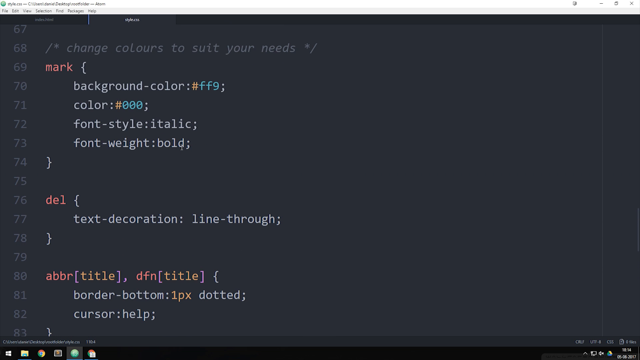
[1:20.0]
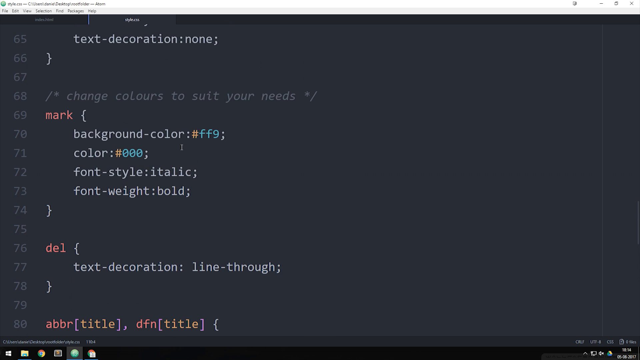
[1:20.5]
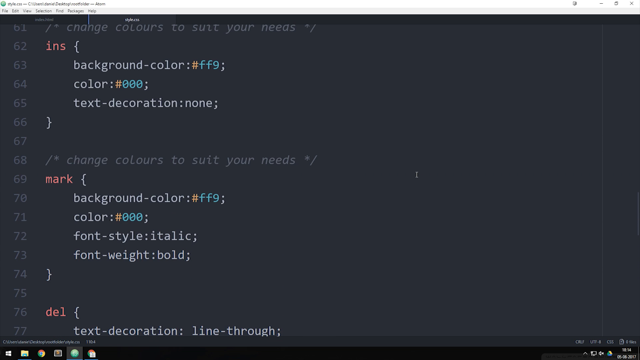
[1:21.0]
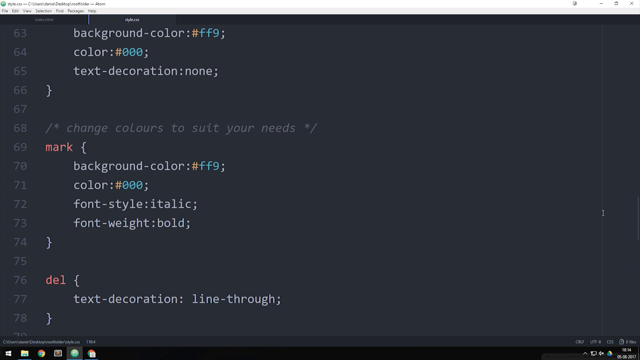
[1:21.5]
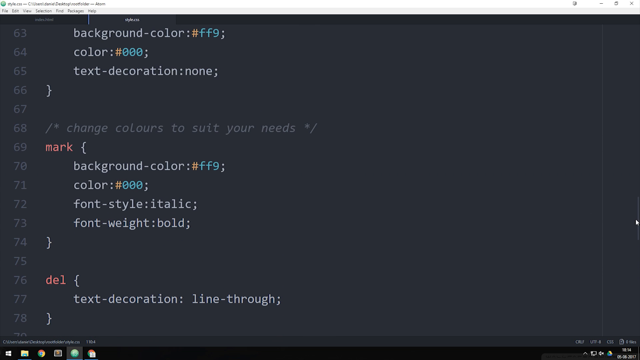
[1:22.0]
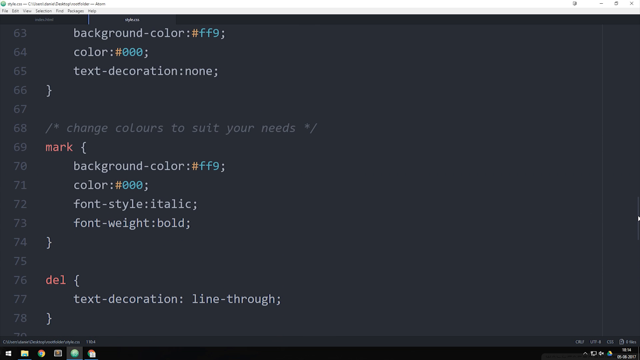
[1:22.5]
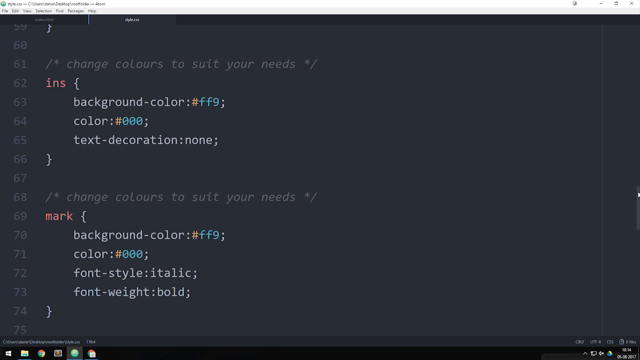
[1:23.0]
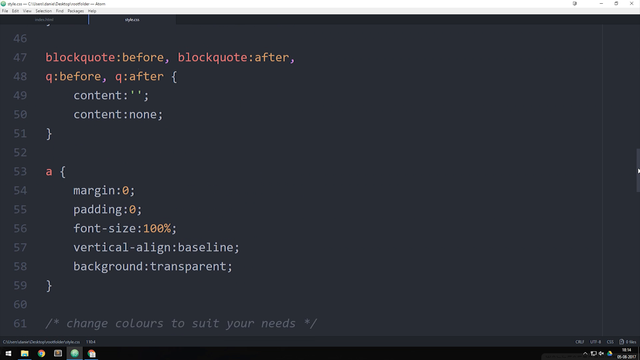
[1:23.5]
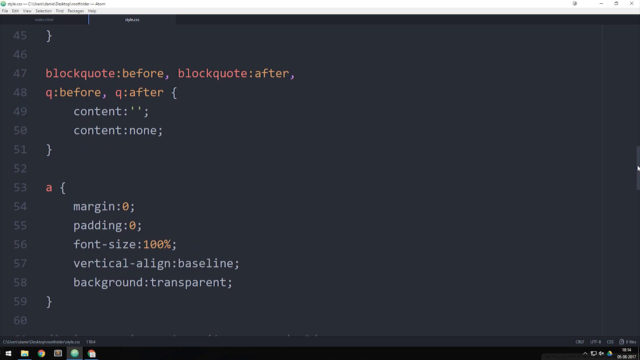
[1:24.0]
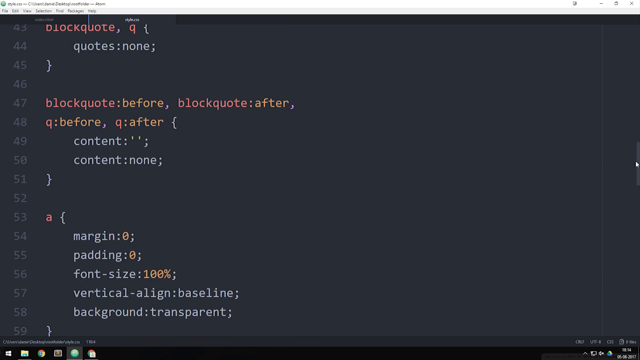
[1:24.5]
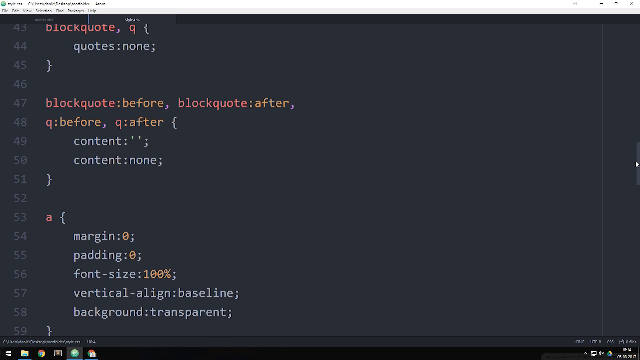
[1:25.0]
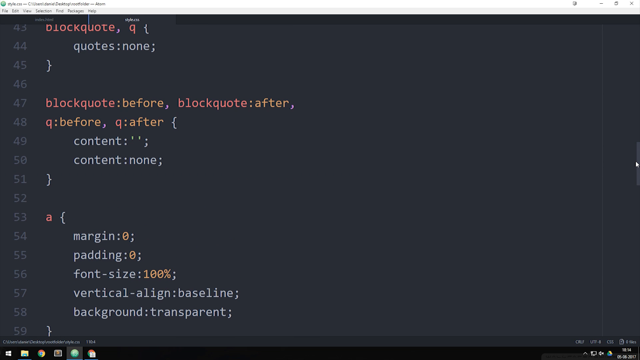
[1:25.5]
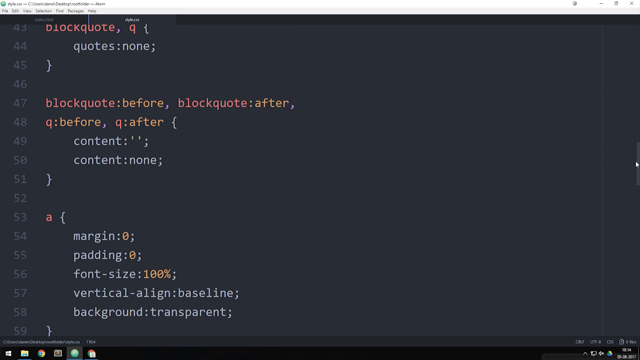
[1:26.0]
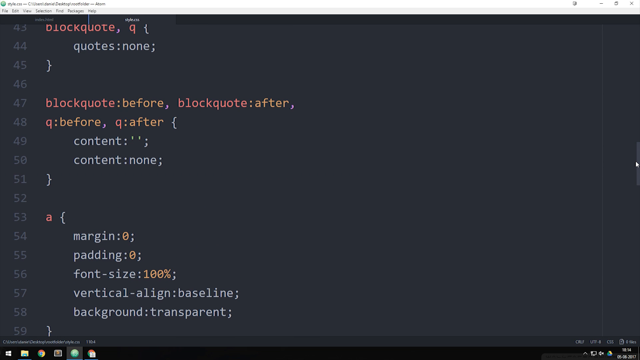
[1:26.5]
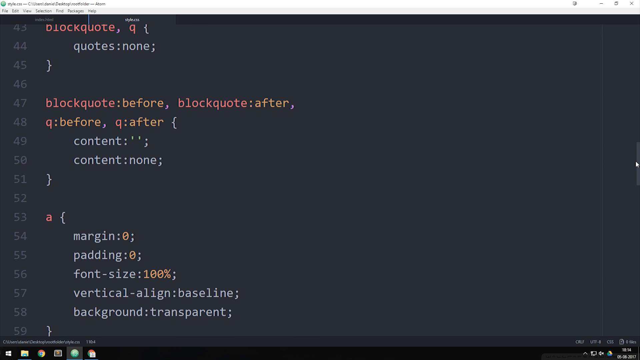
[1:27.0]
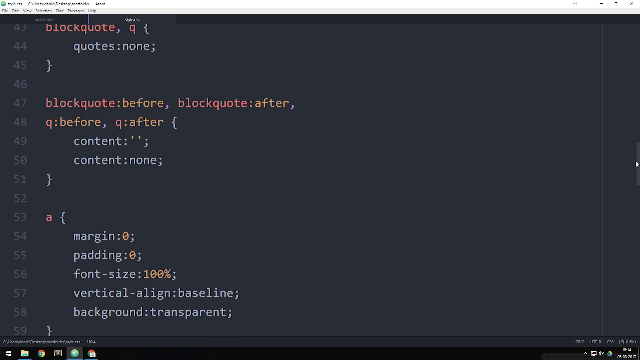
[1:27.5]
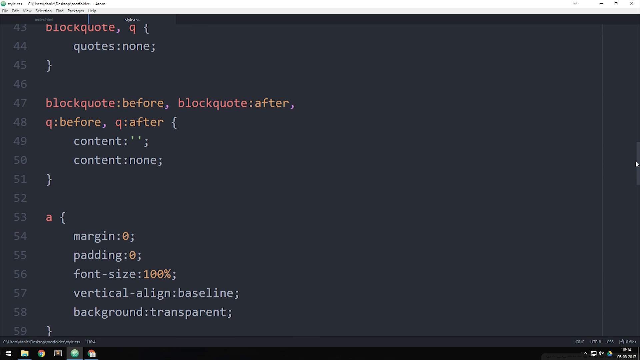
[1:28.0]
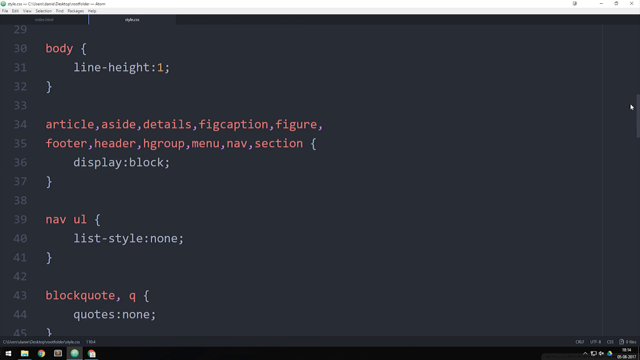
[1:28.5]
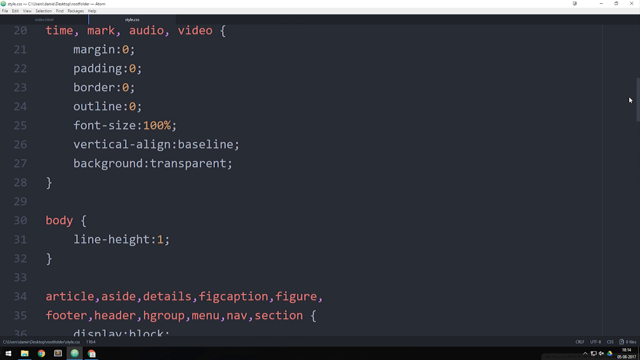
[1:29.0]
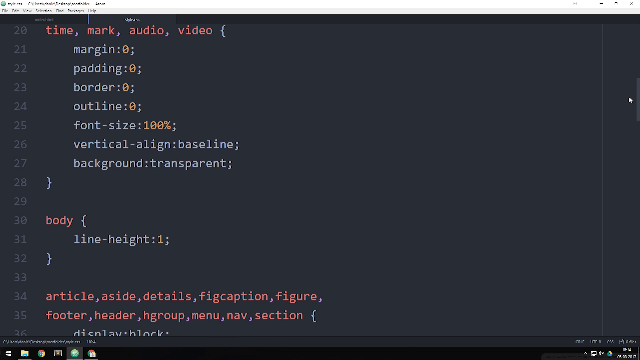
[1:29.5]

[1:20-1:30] Some sort of HTML code appears on a black background, running from line 67 to line 81. Line 68 says "change colors to suit your needs", line 70 says "background color", line 71 is "color" with "#000", line 72 is "font style italic", line 73 is "font weight bold", line 77 says "text decoration line through", line 80 says "abbr title, dfn title", and line 81 says "border bottom one px dotted". The person viewing the screen scrolls up and down through many lines of code, hovers over line 40 for a second, moves around to the 20s, and ends up back at the original code.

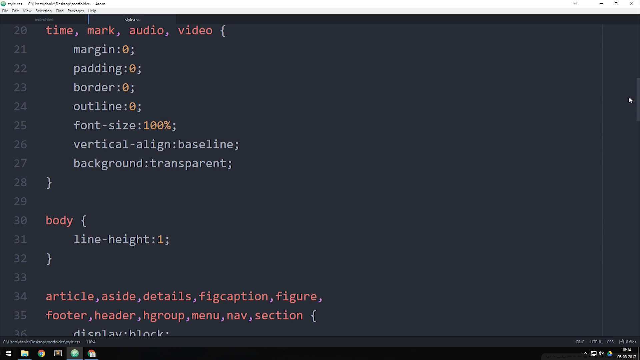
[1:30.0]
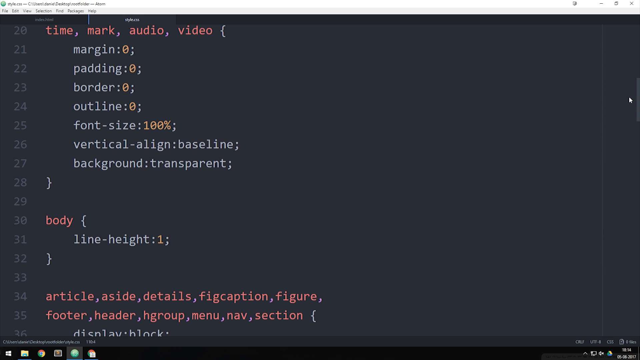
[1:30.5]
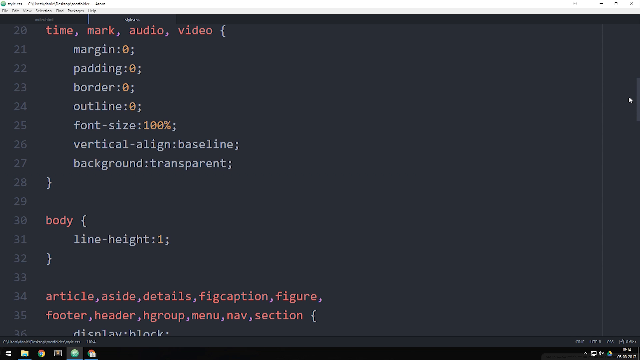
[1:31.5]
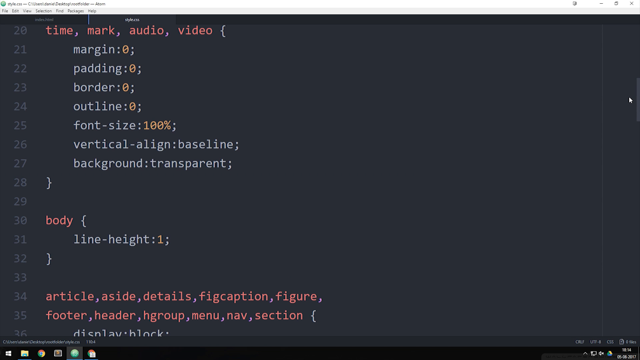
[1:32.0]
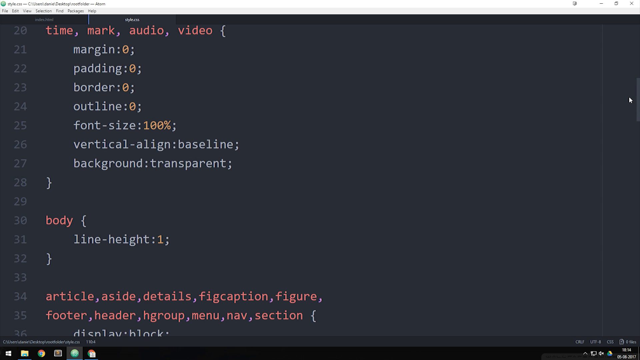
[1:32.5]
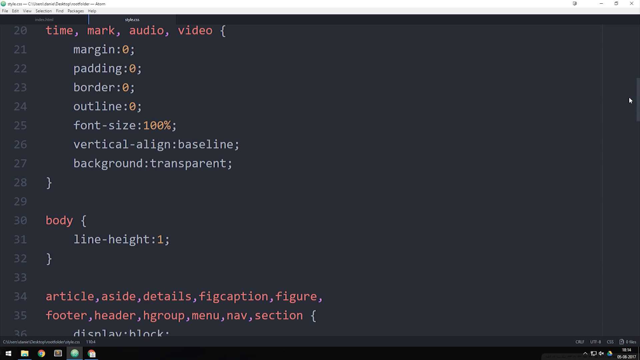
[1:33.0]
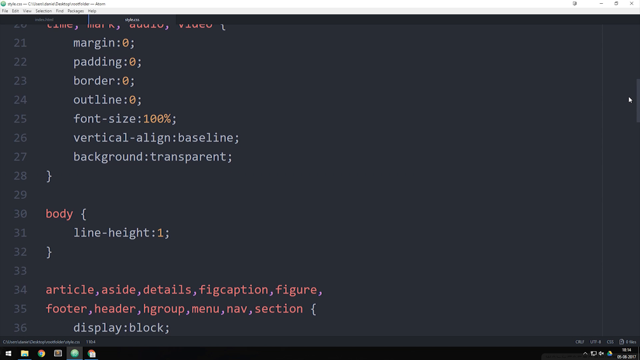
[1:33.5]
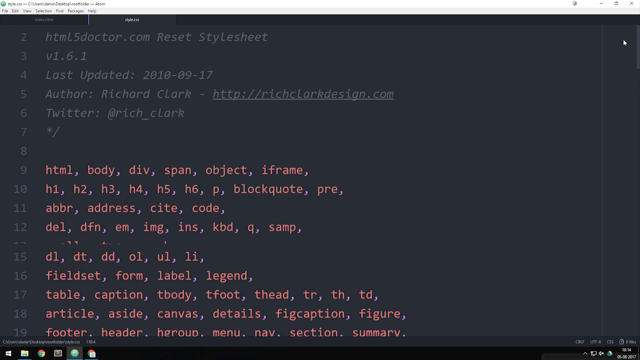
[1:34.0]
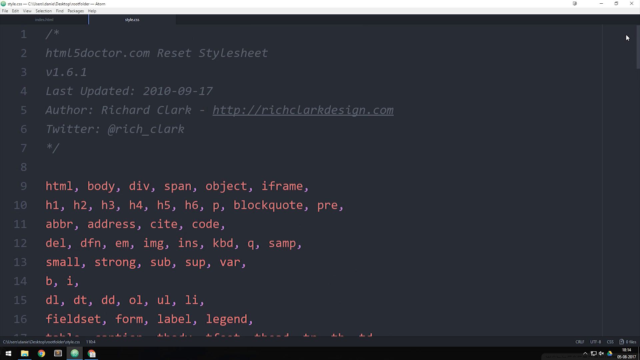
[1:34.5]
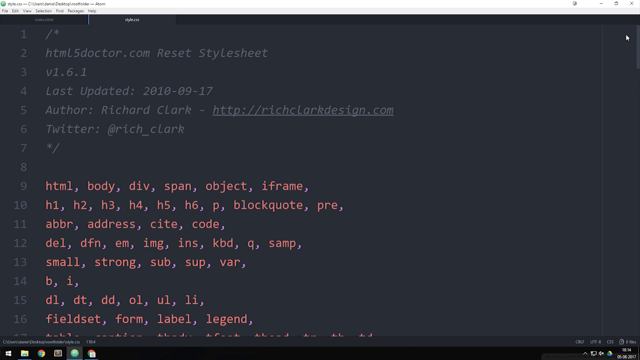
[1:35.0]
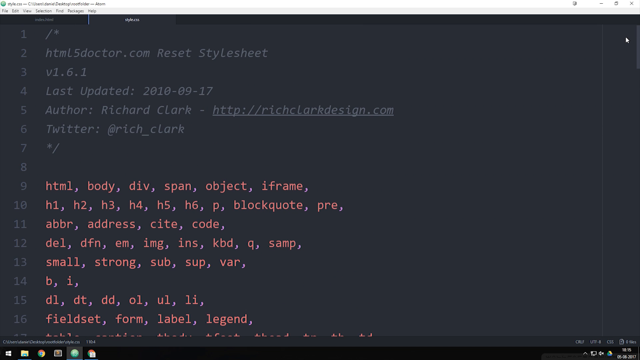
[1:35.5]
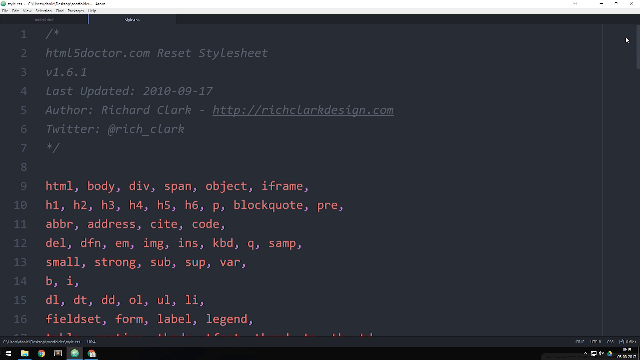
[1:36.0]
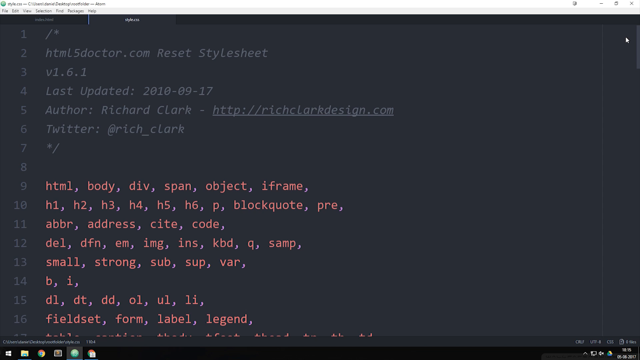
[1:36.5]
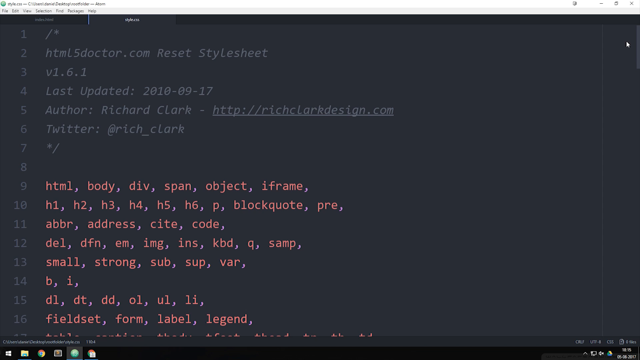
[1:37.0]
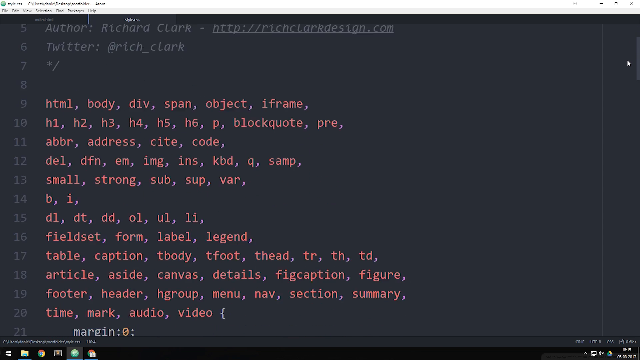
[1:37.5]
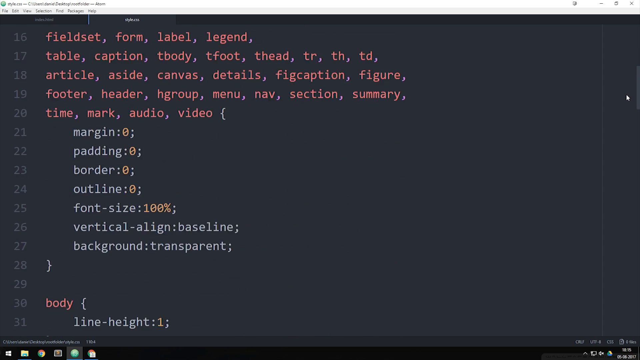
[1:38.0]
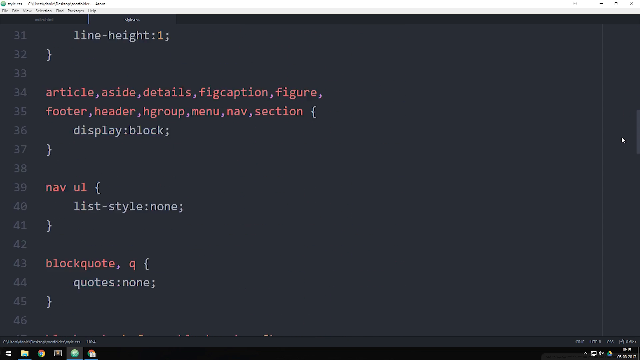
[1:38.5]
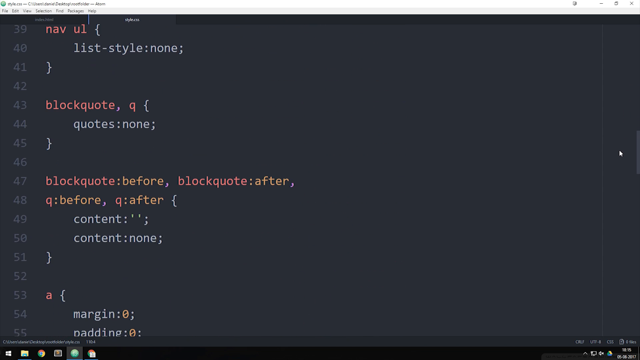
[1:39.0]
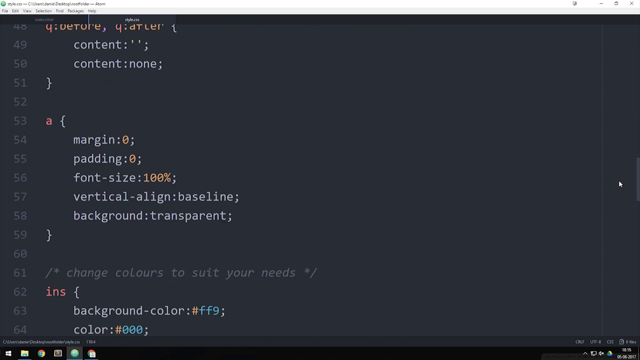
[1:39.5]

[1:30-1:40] A dark screen shows a lot of HTML code, starting at line 20 and visible up to about line 34. Line 20 says "time, mark, audio, and video", followed by details and variables for those sections through line 27. Line 30 says "body", line 31 is line height, which is one, and line 34 says "article, aside, details, fig, caption, and figure". The view stays on this area for a while, then the person scrolls up through many different sections of code, hovers around lines 1 to 10 for a bit, and scrolls back down. At line 1 the code starts with just a backslash, followed by the author and the version of the HTML. Line 9 says "HTML body, div, span, object, iframe", and line 10 says "h1, h2, h3, h4, h5, h6, p, block, quote, and pre". The HTML code is on a black backdrop.